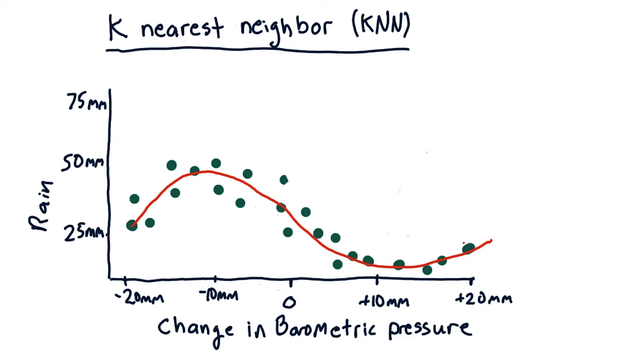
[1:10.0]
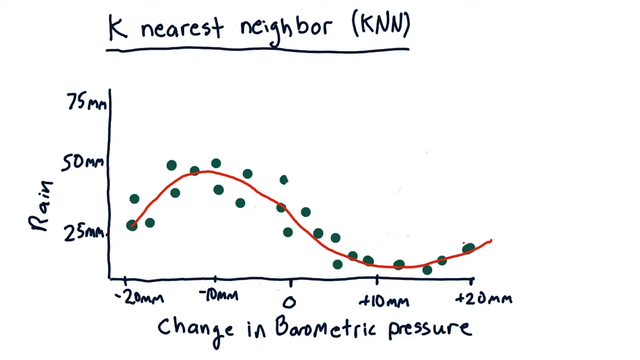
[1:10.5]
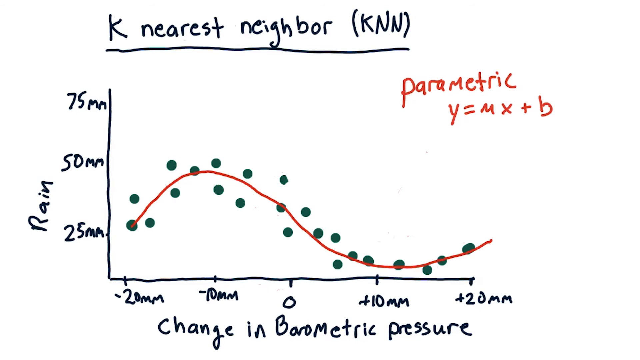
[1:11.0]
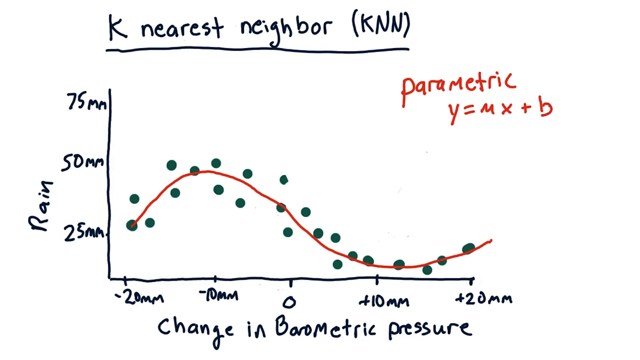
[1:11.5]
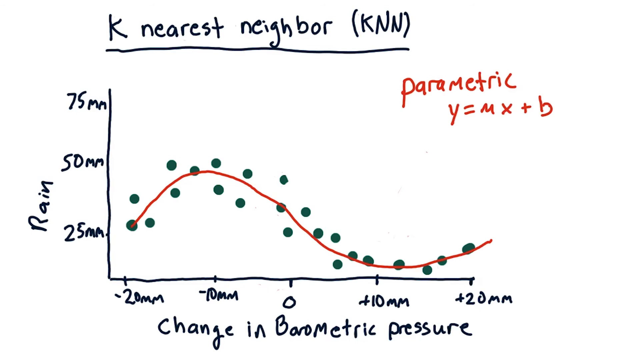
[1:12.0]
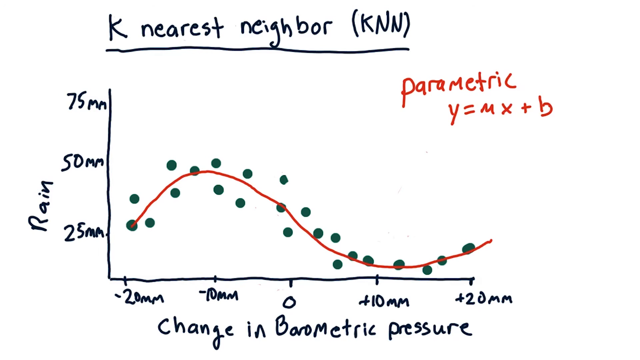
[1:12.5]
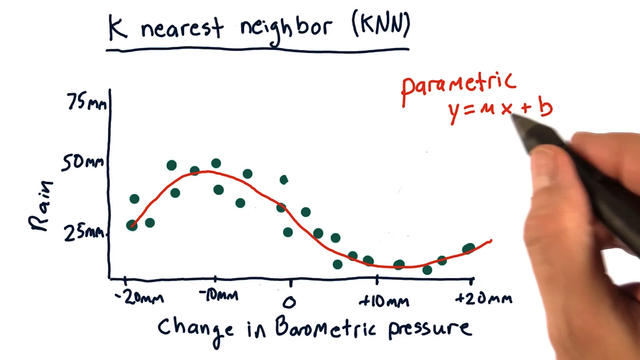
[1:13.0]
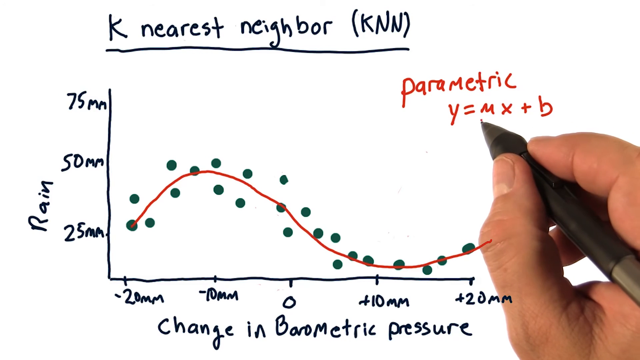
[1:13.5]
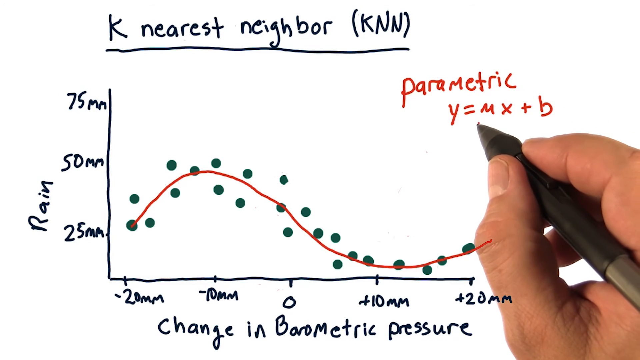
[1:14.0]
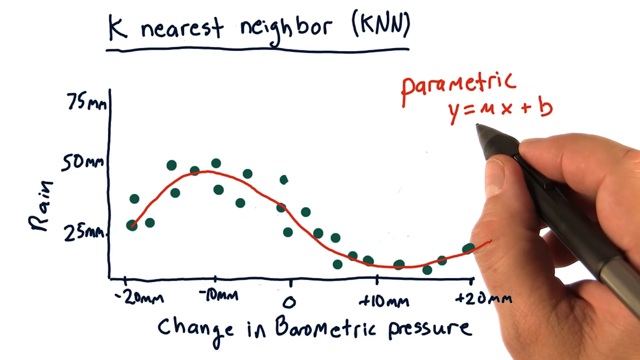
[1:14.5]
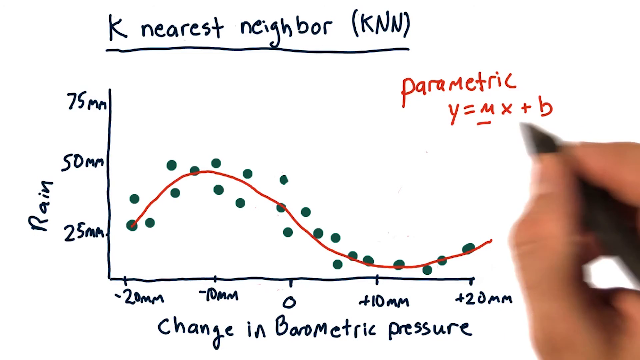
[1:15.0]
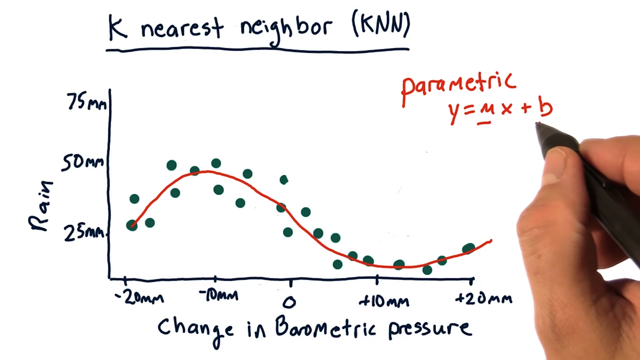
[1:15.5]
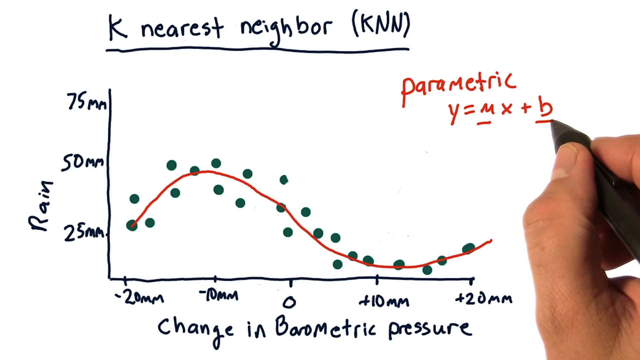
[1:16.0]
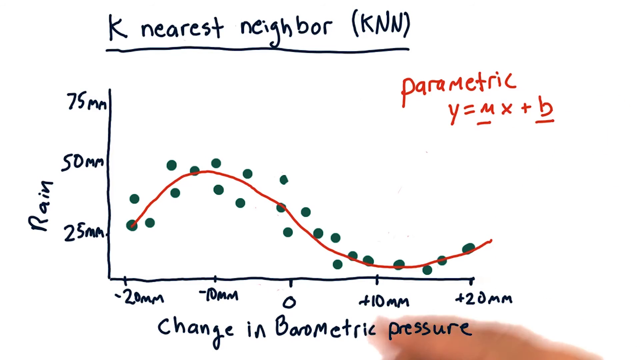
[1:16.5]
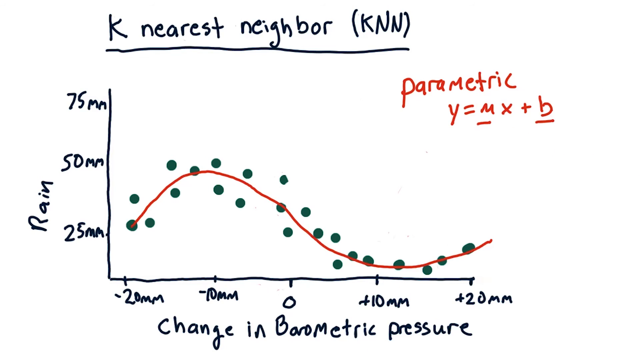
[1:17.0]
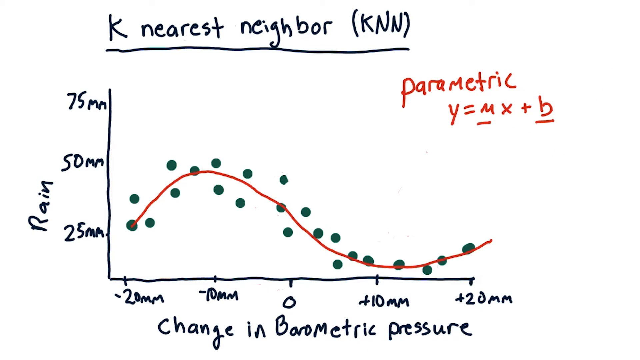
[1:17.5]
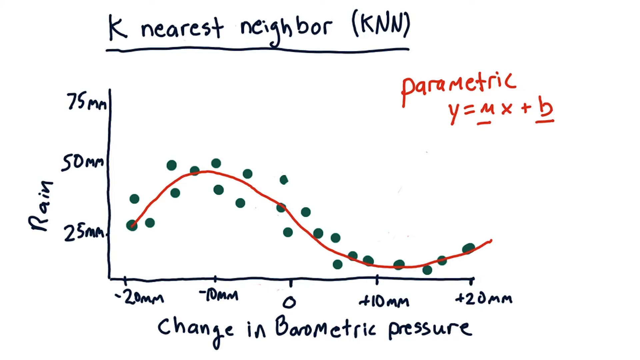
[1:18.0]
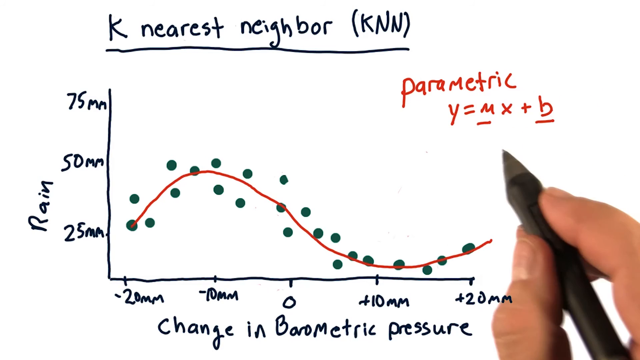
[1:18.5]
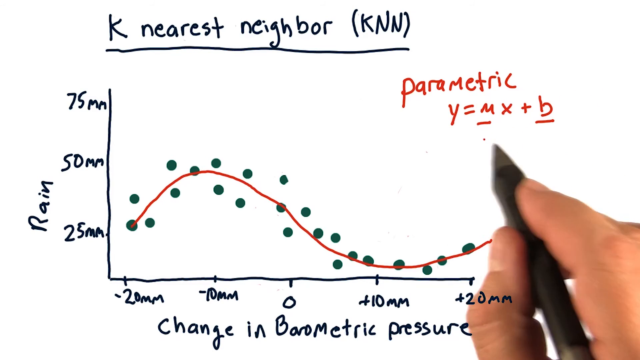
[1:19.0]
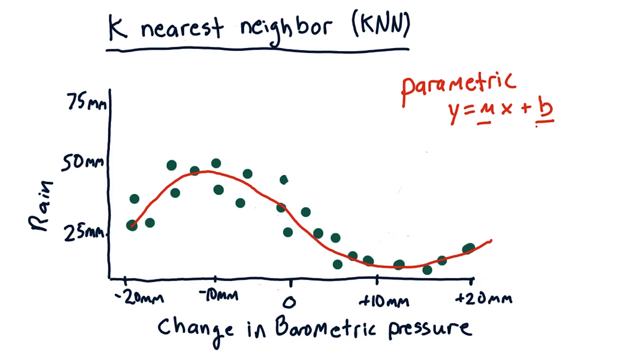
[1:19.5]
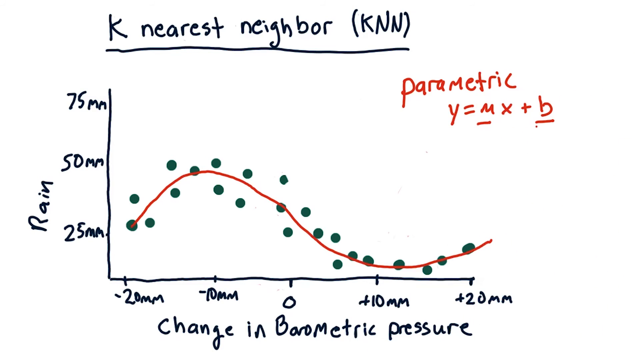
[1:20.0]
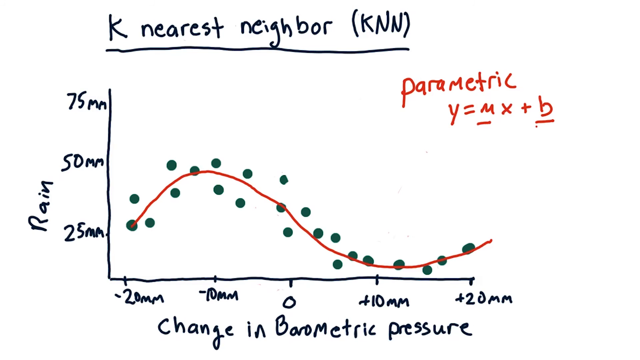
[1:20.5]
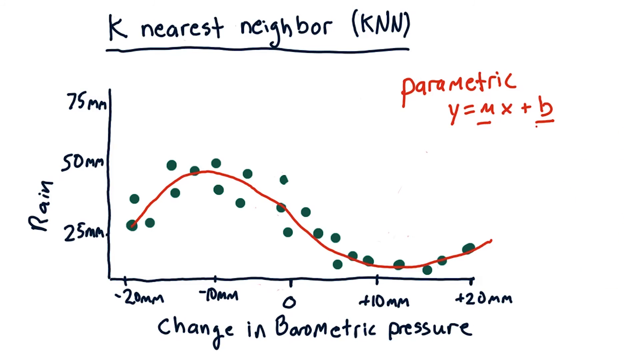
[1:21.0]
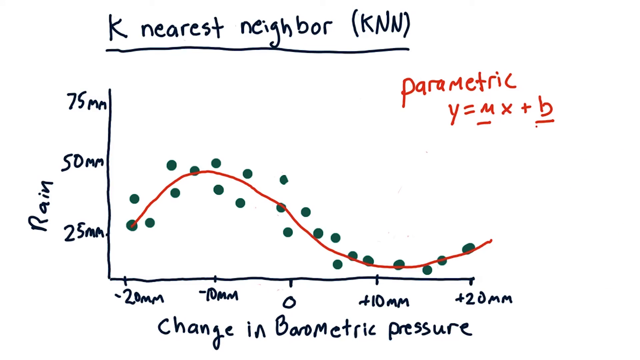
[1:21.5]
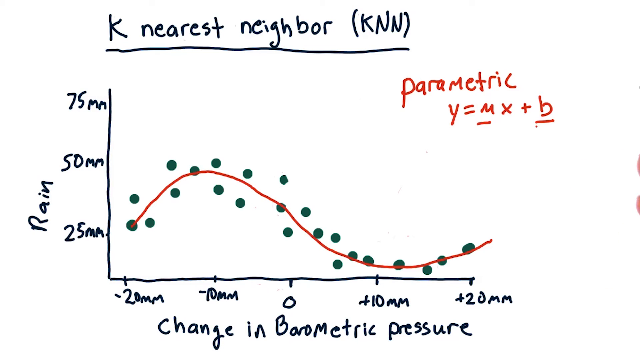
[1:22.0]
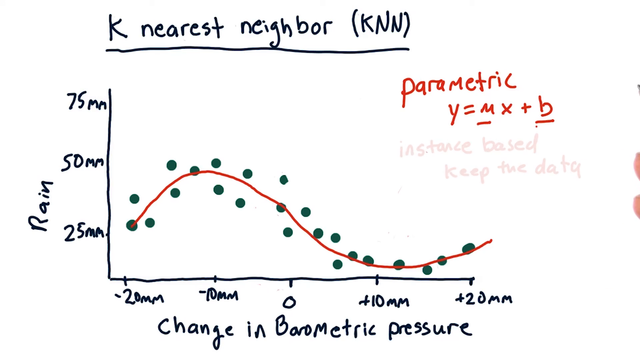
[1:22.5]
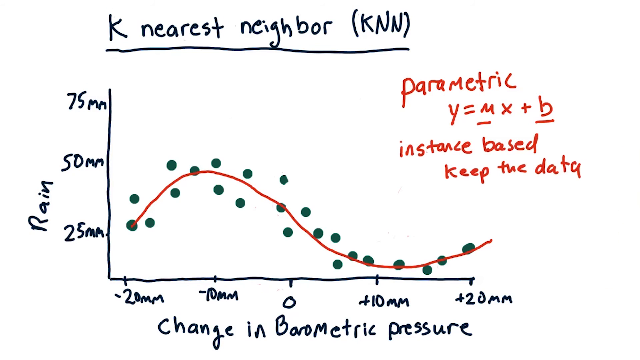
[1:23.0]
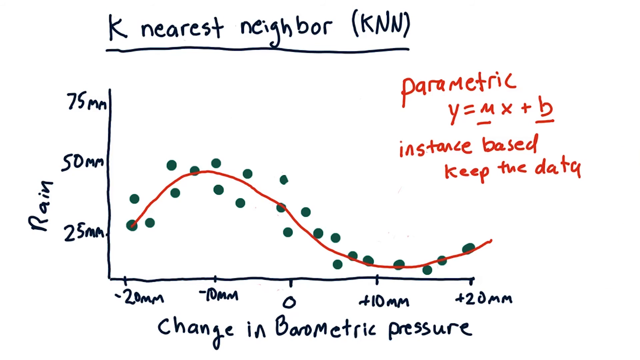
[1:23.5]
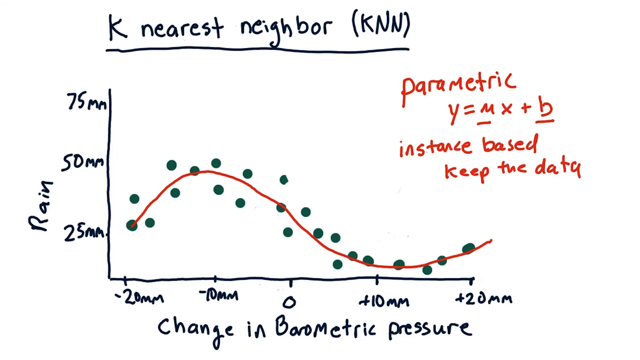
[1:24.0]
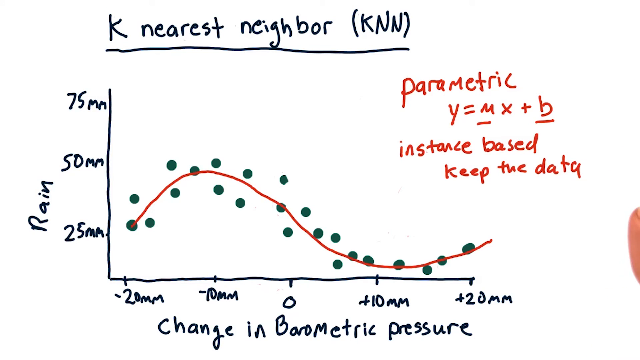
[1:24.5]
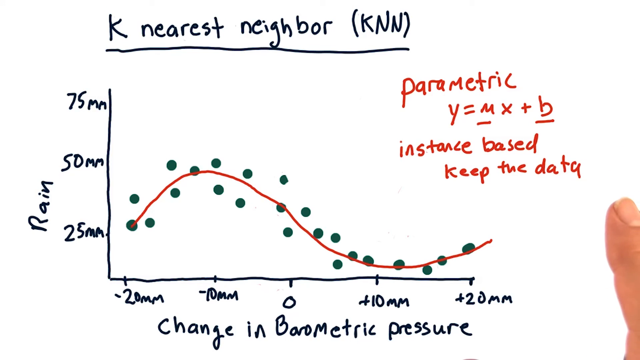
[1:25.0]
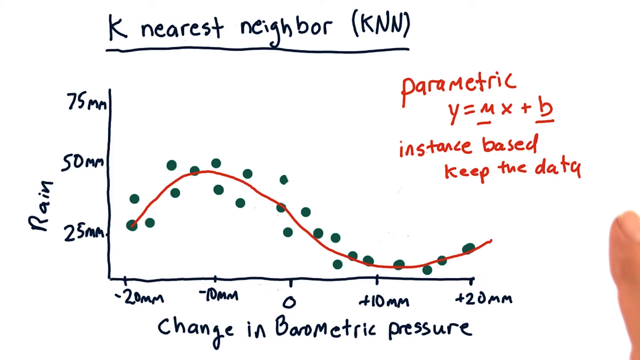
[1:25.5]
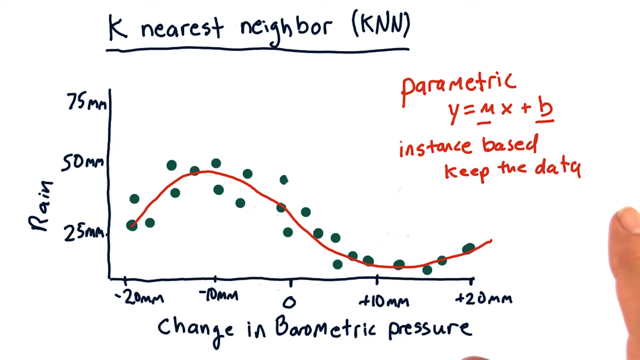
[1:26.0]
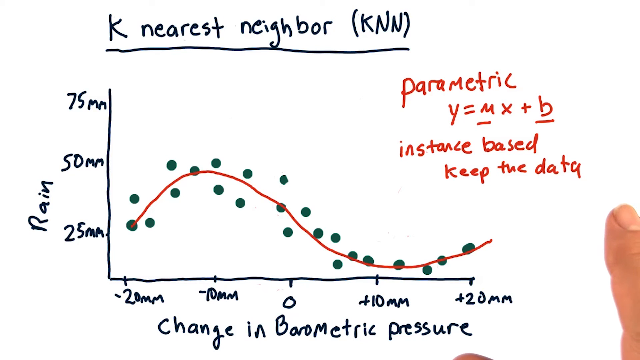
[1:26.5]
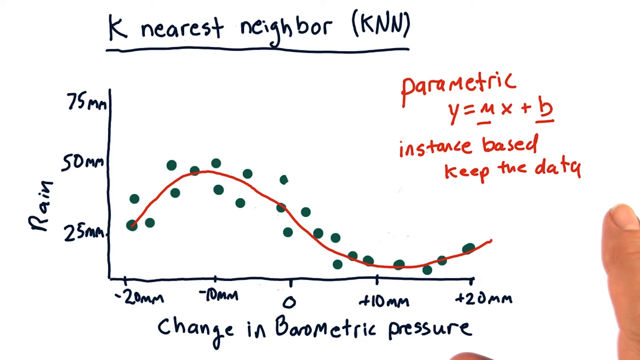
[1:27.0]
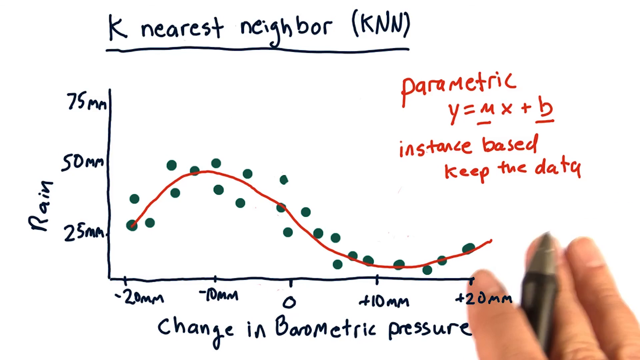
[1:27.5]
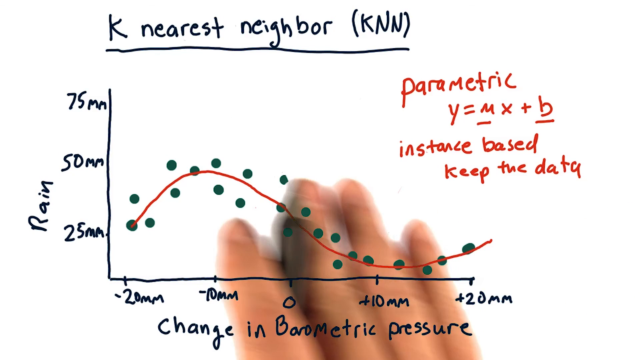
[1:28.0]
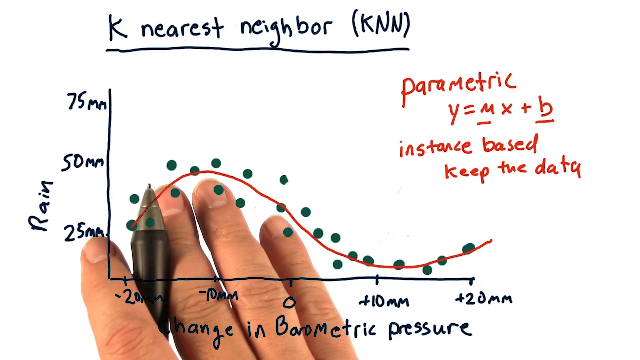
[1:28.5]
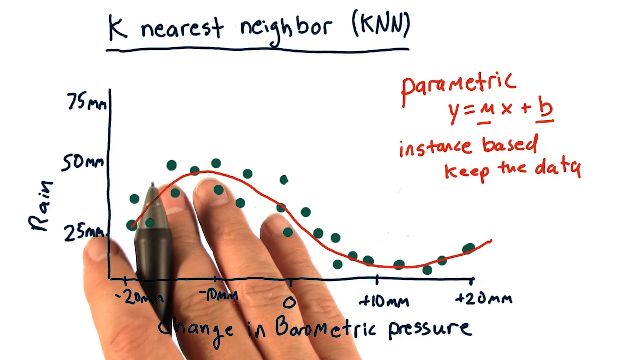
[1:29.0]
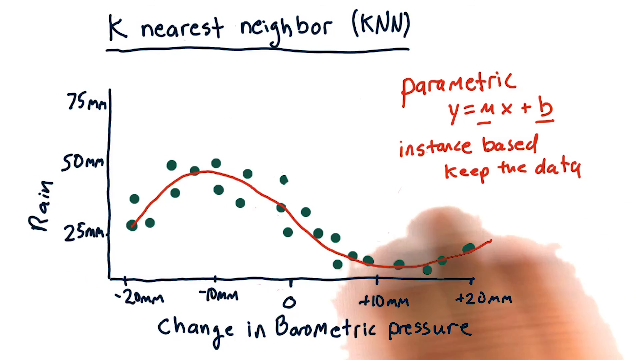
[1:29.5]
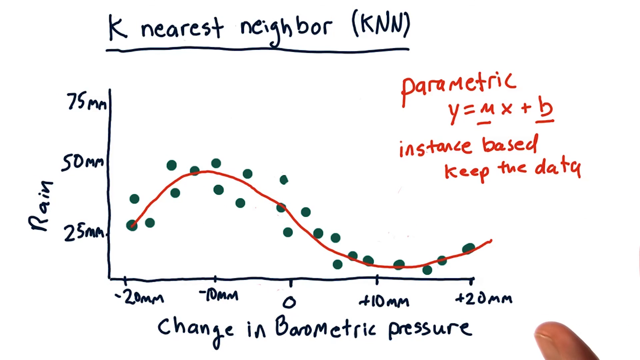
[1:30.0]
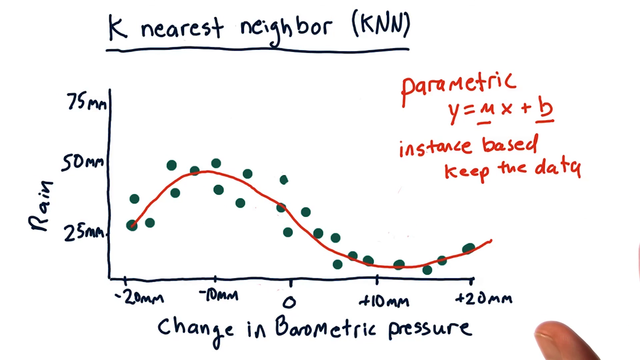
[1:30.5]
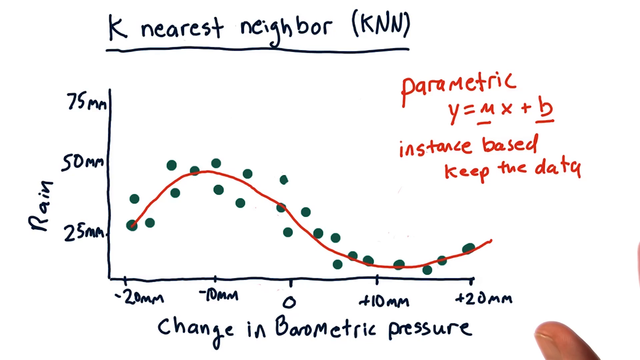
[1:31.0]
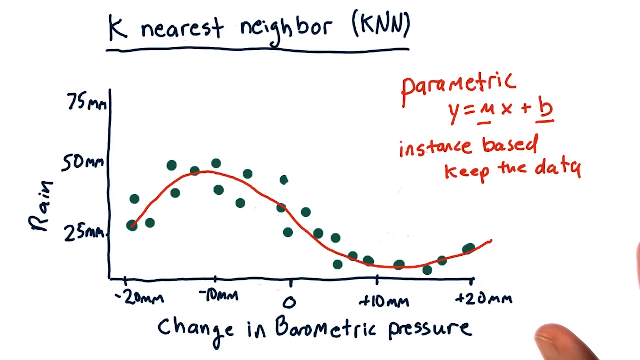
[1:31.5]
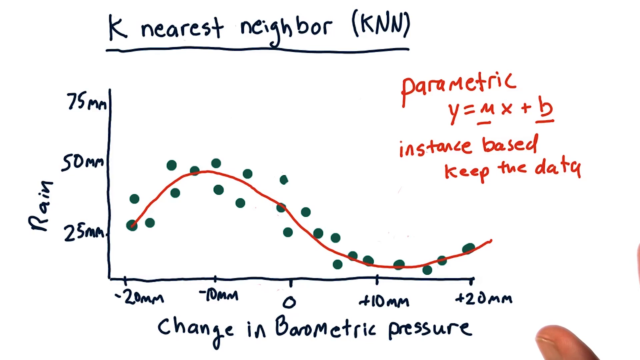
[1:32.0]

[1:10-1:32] The white screen shows the hand-drawn graph in blue with the green dots and the red line showing the general trend. Handwritten red text fades into view on the right side at the top of the graph, reading 'parametric y =mx + b'. The right hand appears from the right side holding the black digital pen, carefully positions itself and draws a red underline under m and b, then quickly moves down off the bottom of the shot. It returns from below, moving as if to emphasise what is being said. Further red text fades in below this writing, reading 'instanced based keep the data'. The thumb of the right hand is visible at the bottom right of the screen, and then the hand appears once again over the graph as if indicating towards the red line.